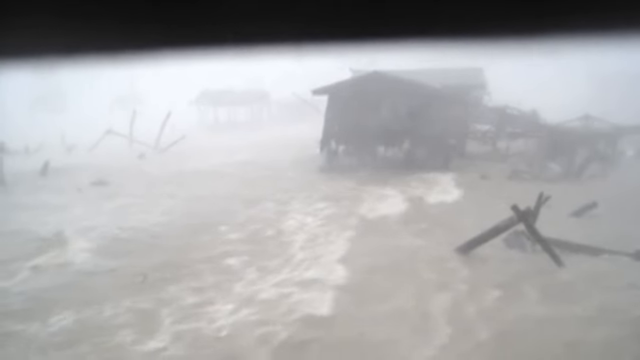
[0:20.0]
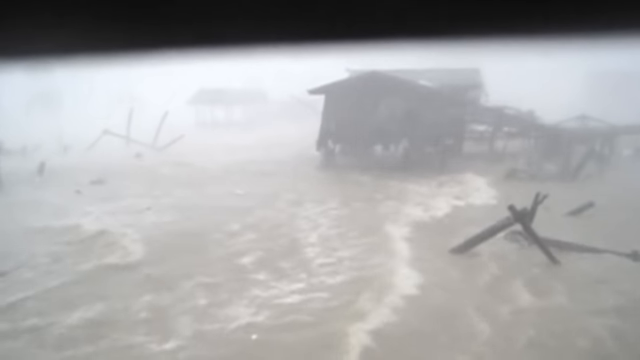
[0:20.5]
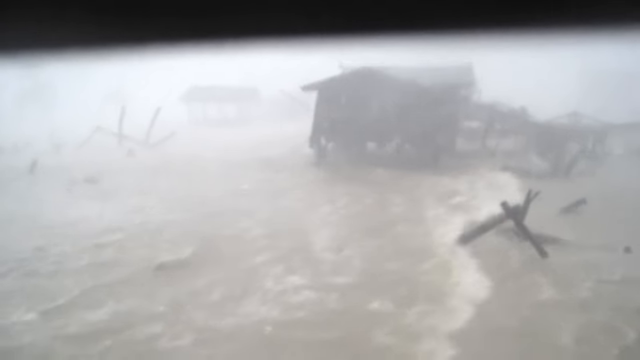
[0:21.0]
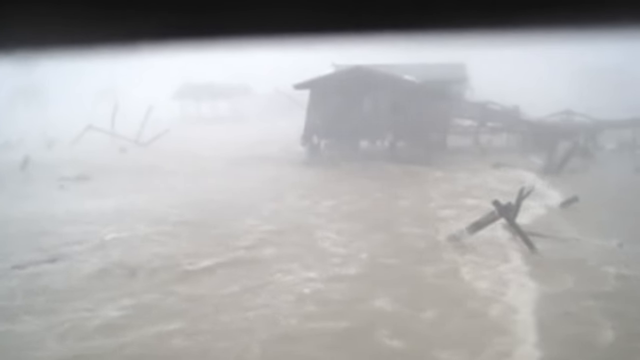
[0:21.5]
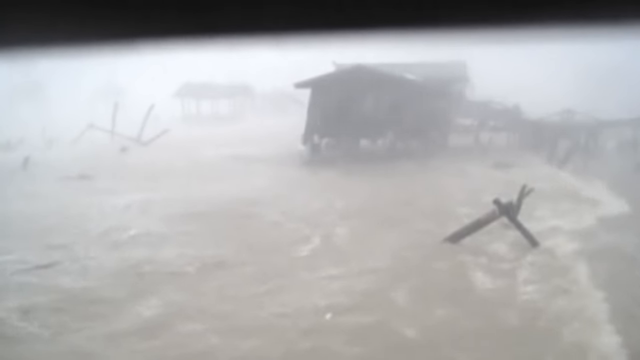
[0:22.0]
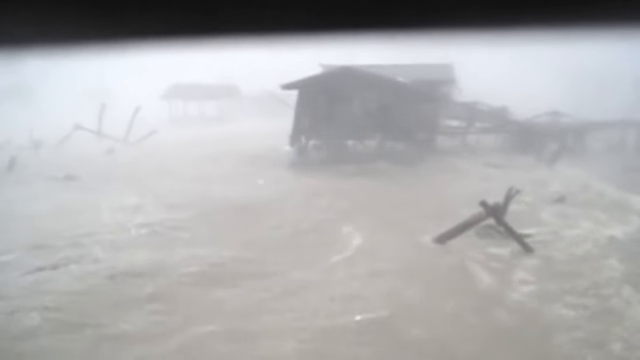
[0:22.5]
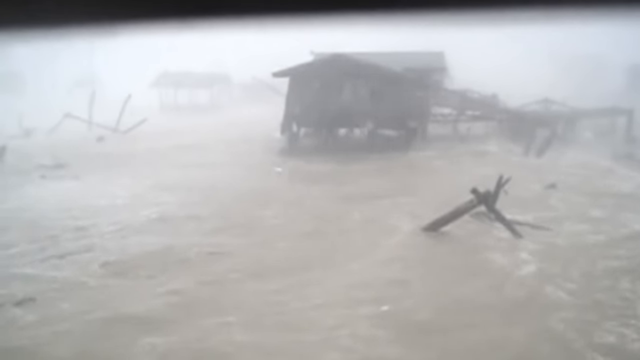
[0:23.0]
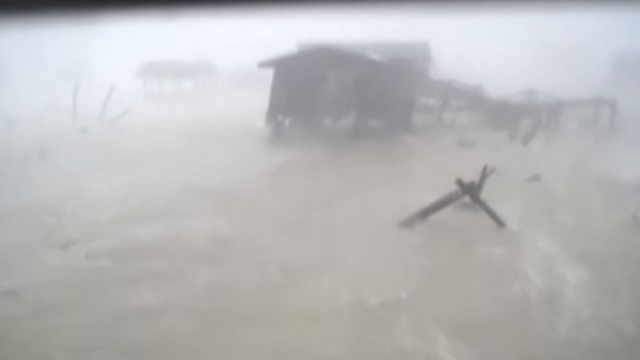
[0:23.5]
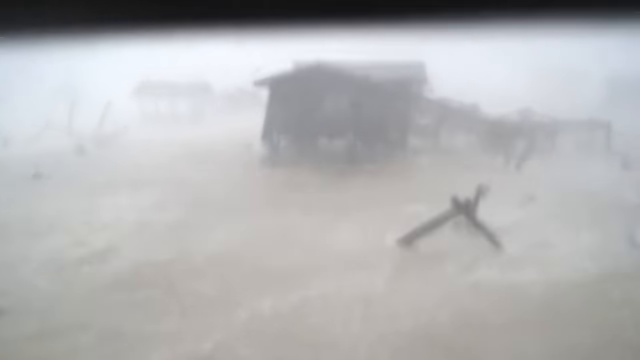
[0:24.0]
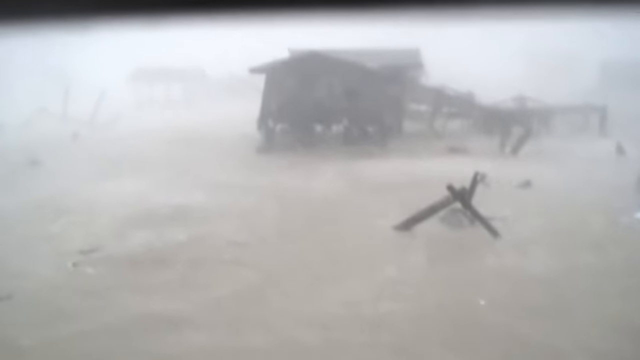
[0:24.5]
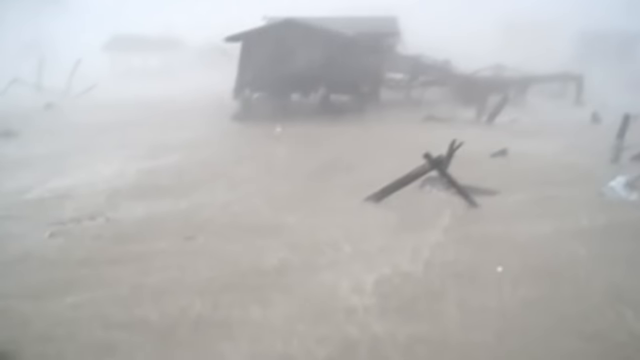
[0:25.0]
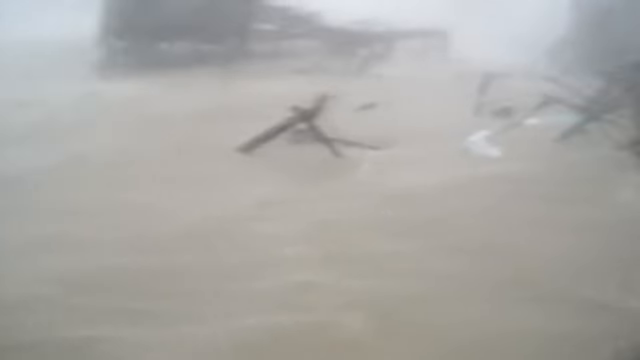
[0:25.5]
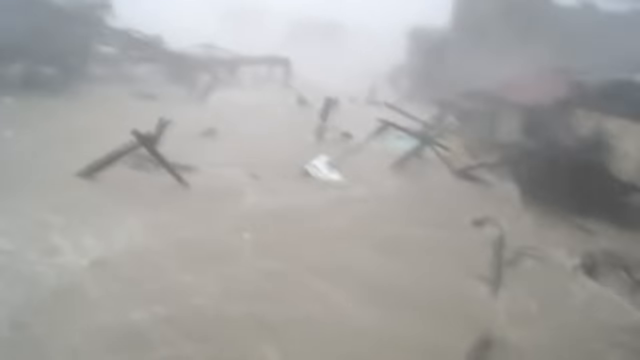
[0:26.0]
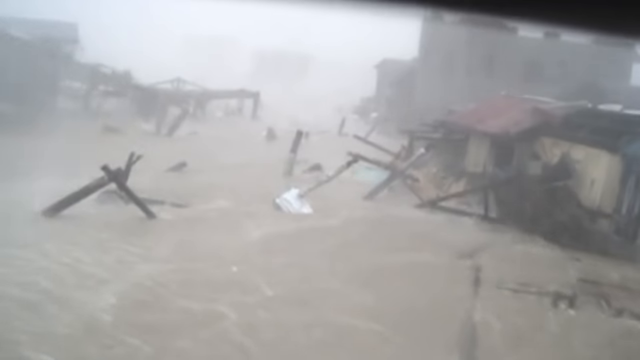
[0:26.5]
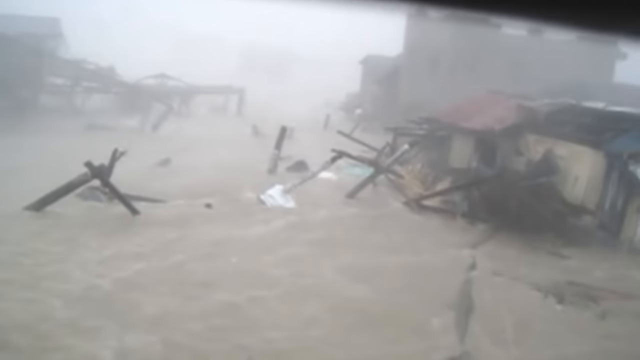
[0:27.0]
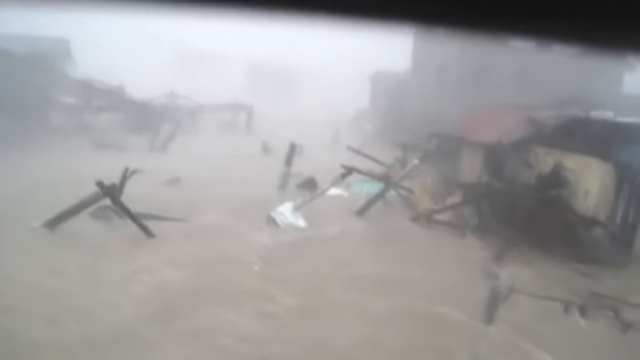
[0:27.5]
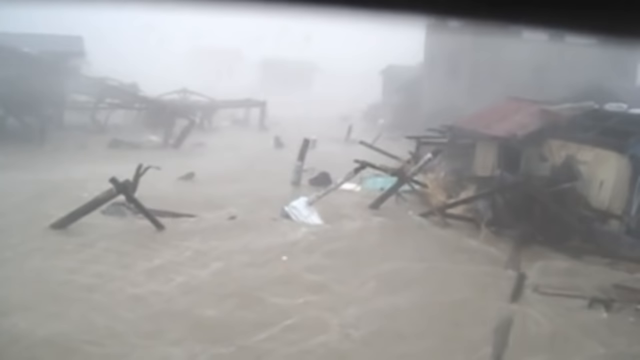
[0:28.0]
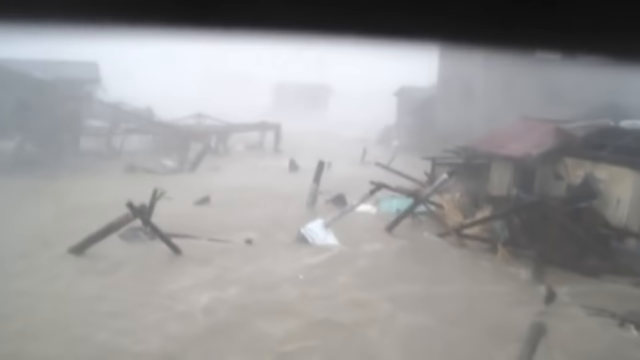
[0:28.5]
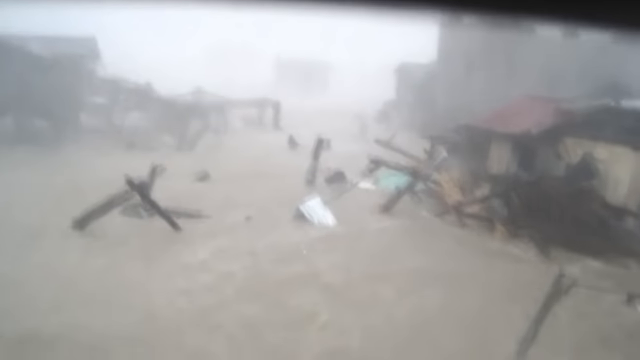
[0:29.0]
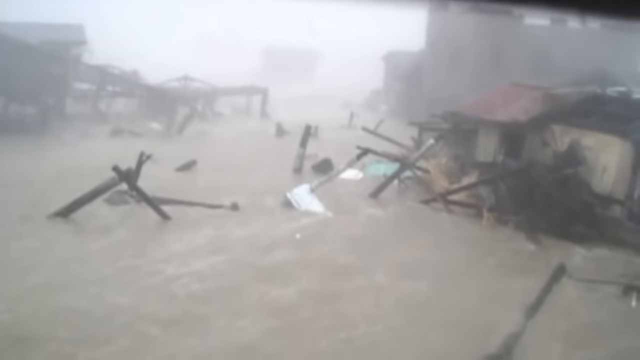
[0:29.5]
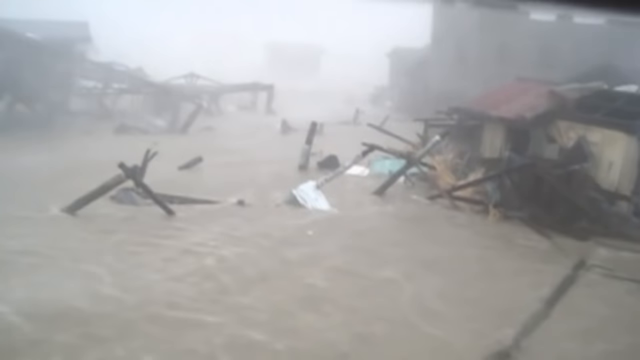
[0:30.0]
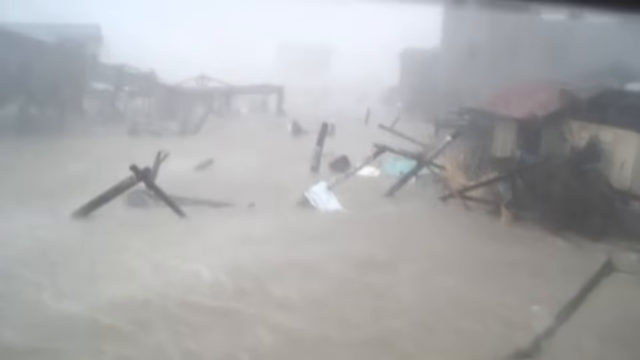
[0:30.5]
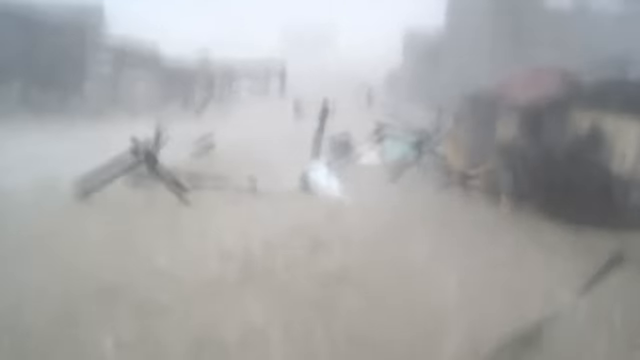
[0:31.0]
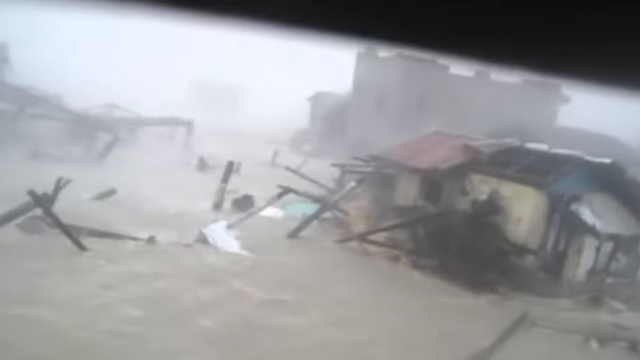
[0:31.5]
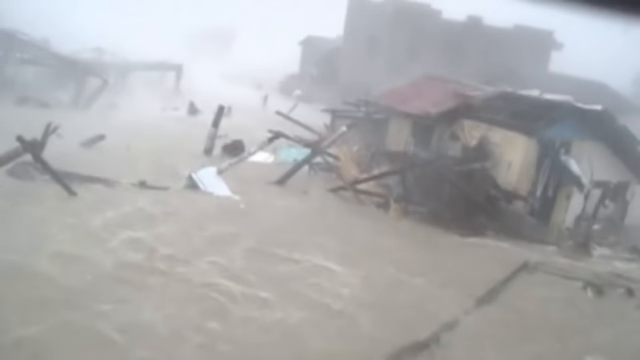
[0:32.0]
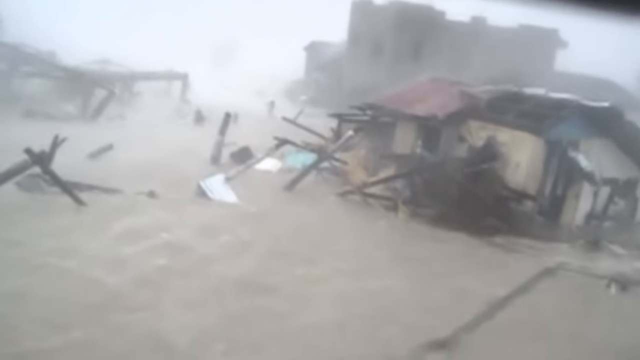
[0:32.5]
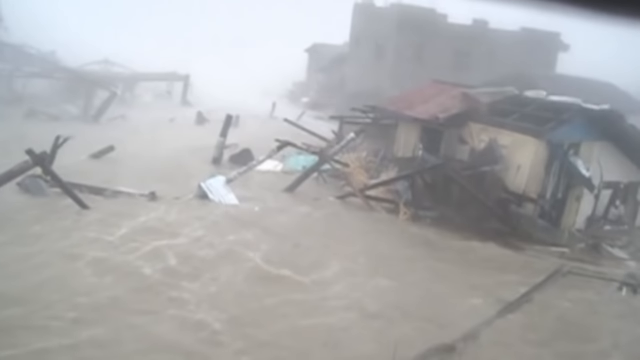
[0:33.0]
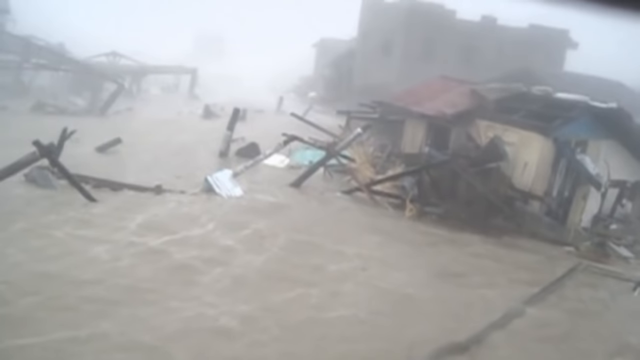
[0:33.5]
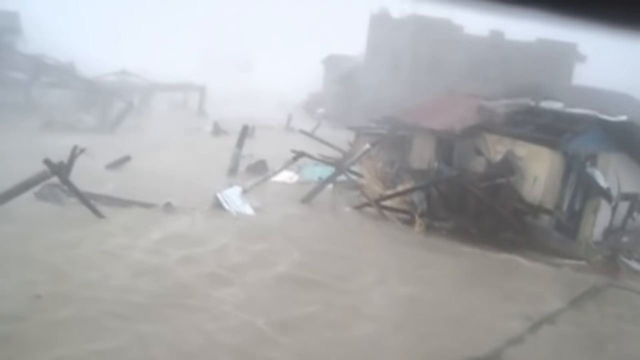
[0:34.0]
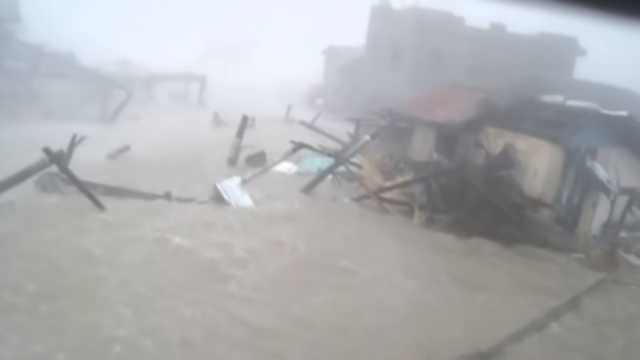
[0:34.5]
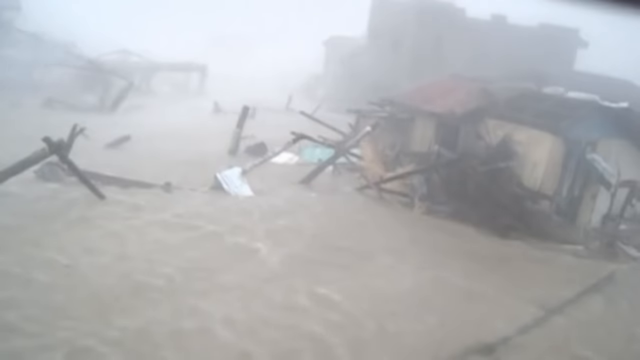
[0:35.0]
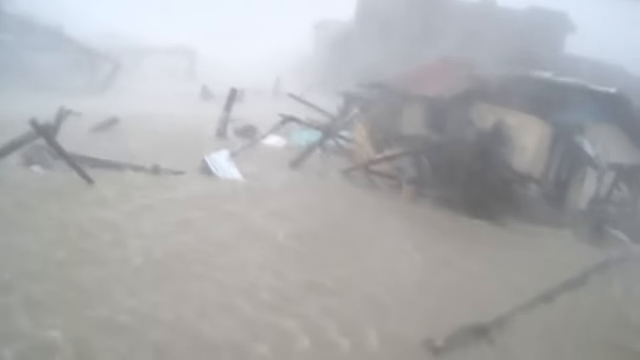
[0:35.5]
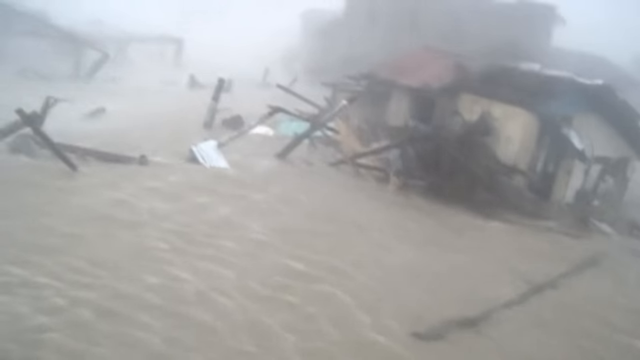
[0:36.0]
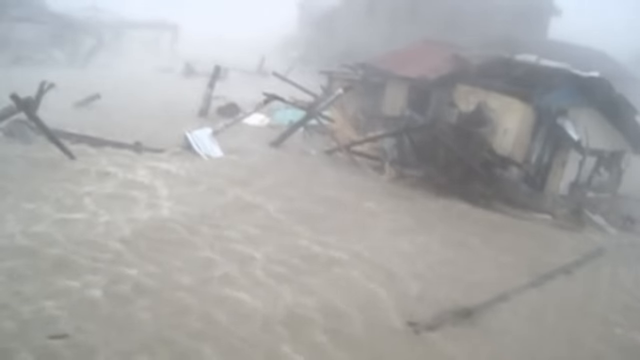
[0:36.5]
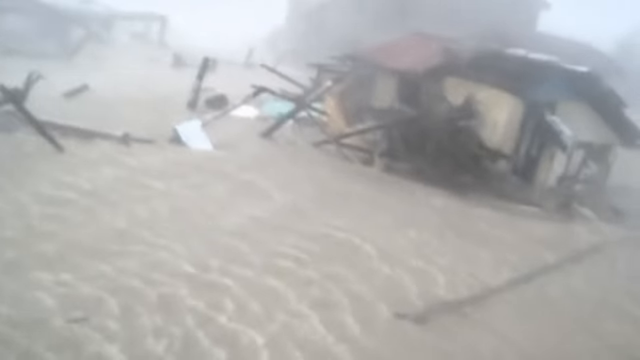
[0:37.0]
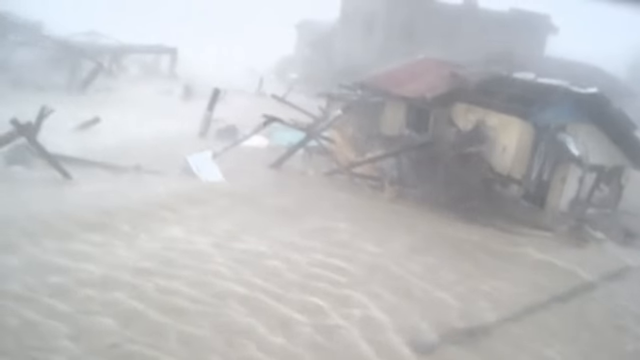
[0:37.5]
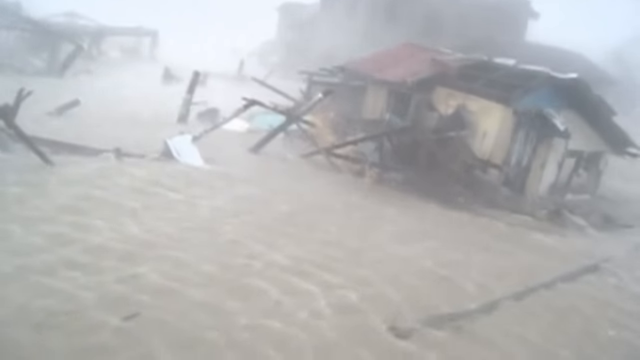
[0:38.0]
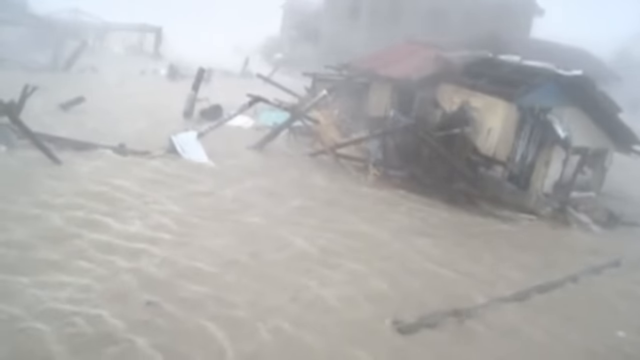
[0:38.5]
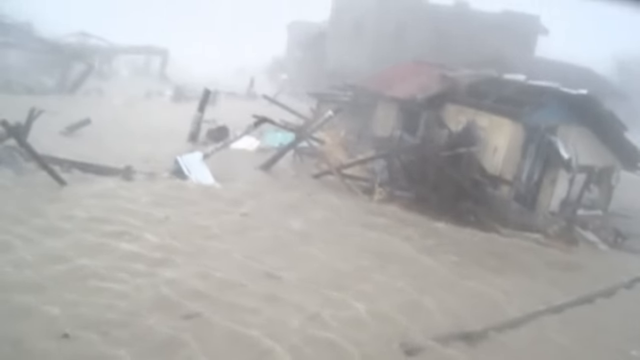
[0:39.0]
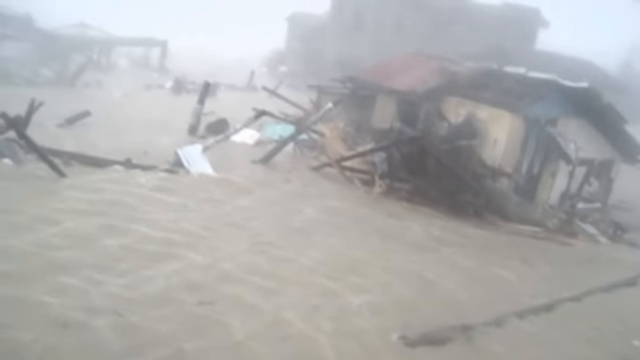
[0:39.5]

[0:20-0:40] The strong wind continues, destroying the houses. Another house is so totally destroyed that its color is hard to tell, though it looks like it was painted cream or off-white. There are a lot of rearranged items, and most things are submerged in water, making it hard to tell what is what. The wind keeps blowing and the water keeps destroying the place. The water seems to be controlled by the wind, changing direction to follow the direction the wind blows. Some unidentified objects in the water, something white and something light green, are swept away.